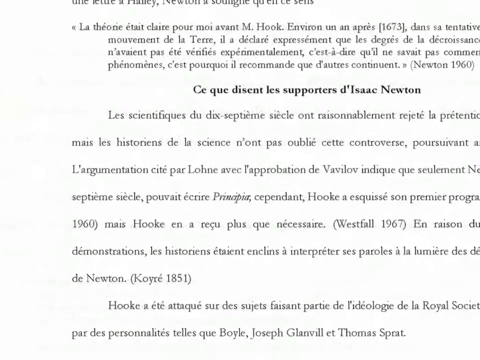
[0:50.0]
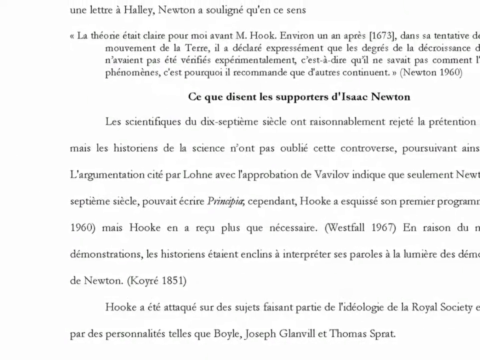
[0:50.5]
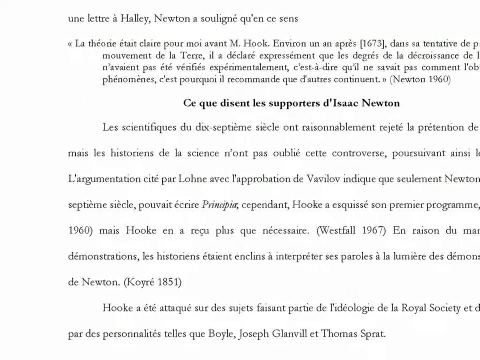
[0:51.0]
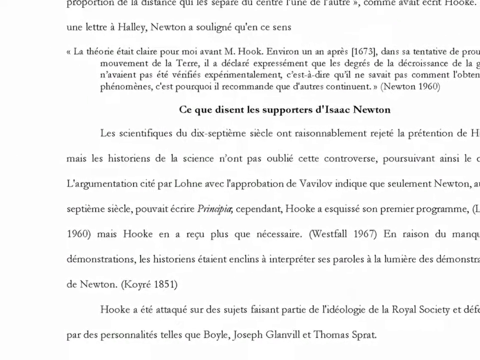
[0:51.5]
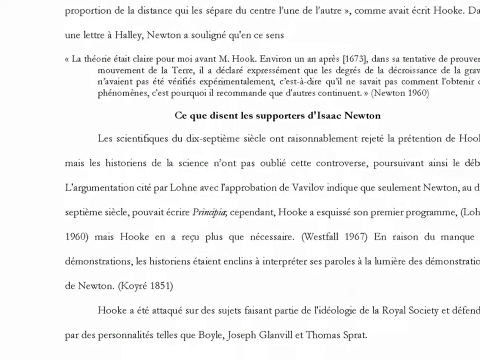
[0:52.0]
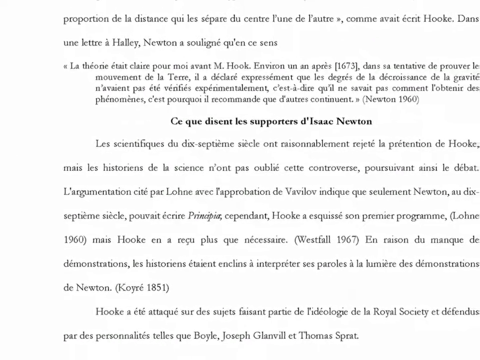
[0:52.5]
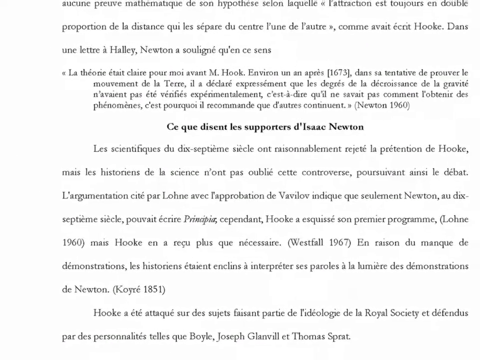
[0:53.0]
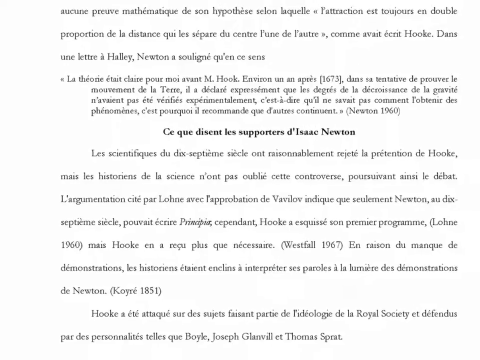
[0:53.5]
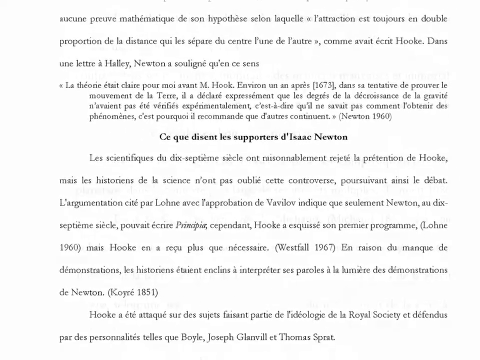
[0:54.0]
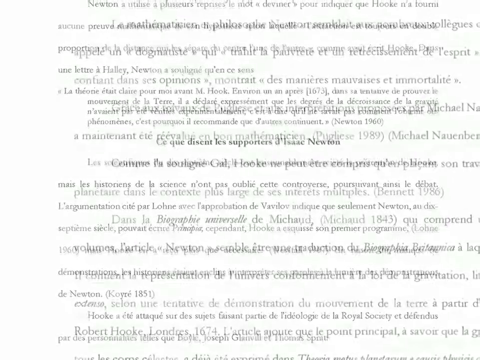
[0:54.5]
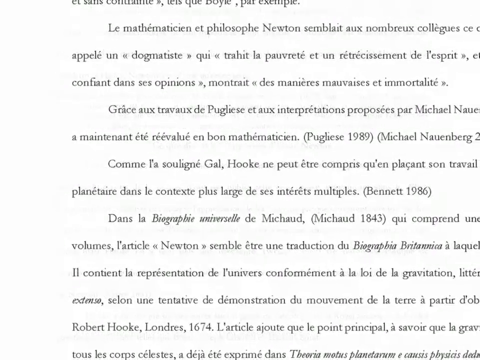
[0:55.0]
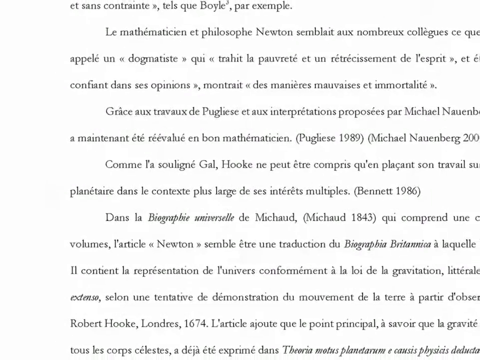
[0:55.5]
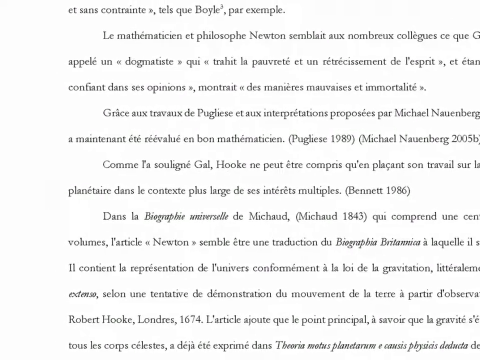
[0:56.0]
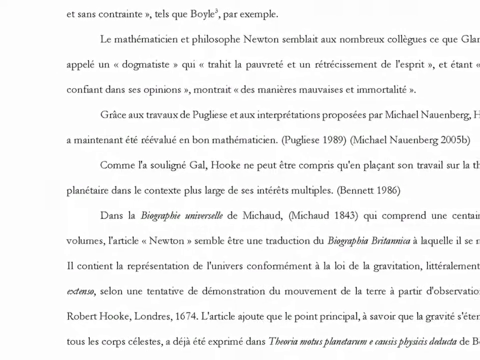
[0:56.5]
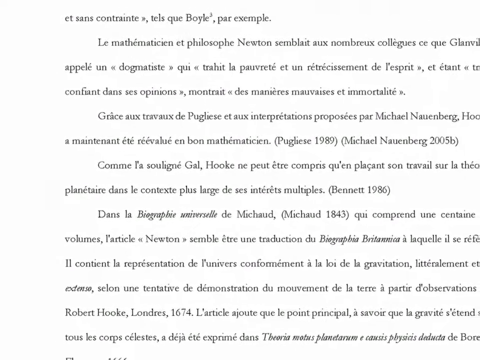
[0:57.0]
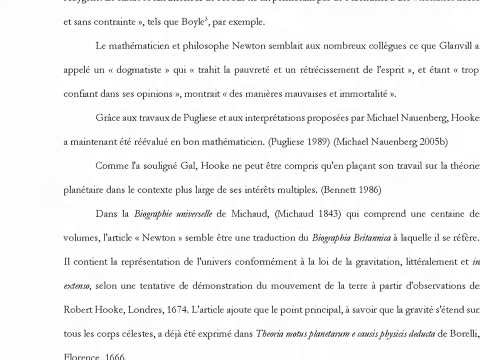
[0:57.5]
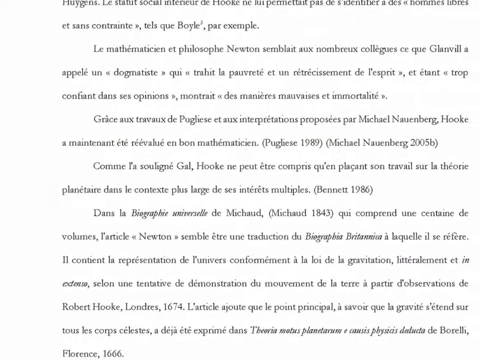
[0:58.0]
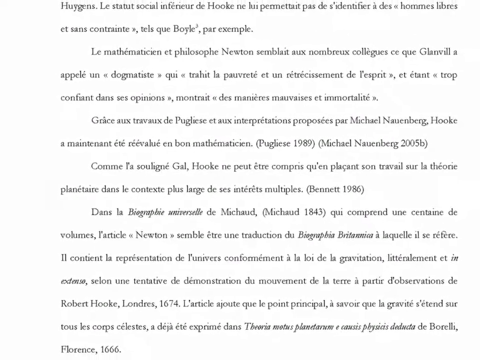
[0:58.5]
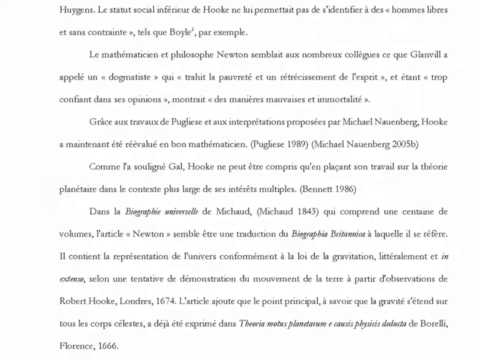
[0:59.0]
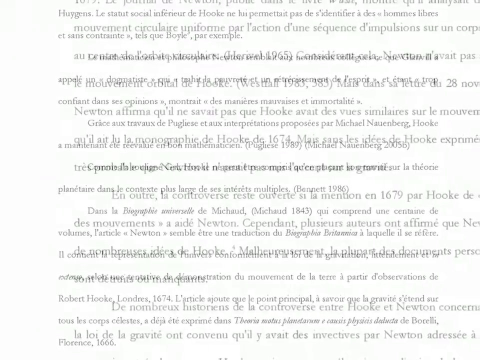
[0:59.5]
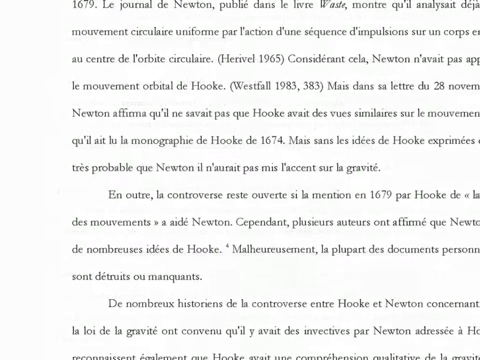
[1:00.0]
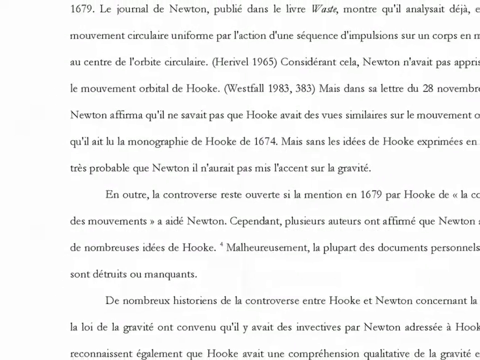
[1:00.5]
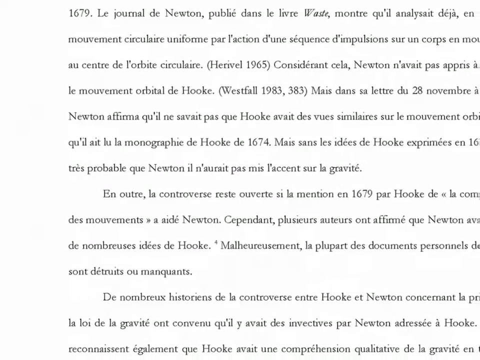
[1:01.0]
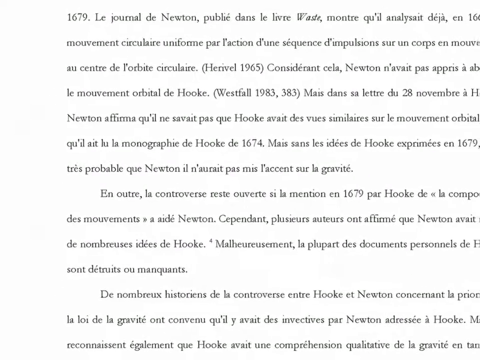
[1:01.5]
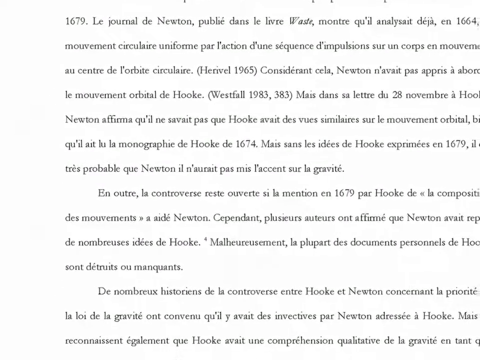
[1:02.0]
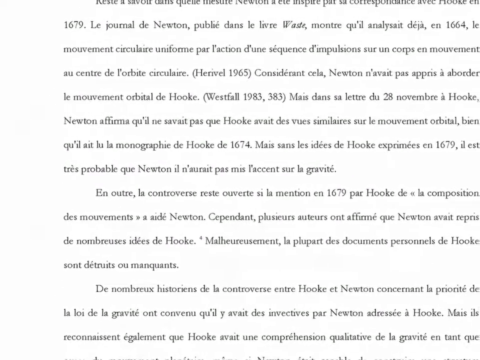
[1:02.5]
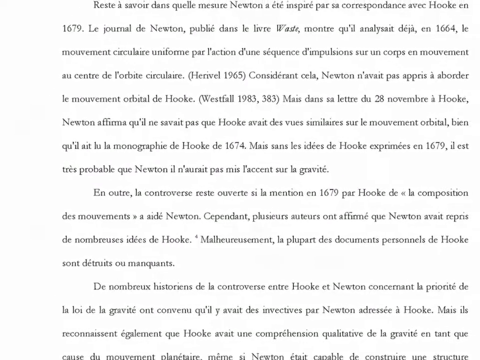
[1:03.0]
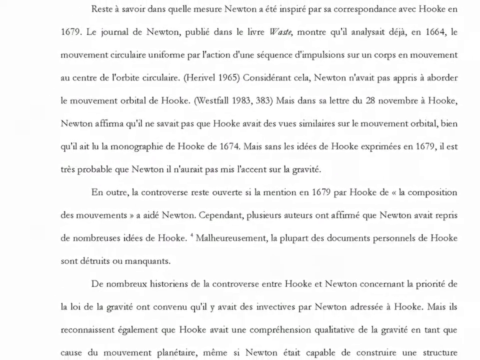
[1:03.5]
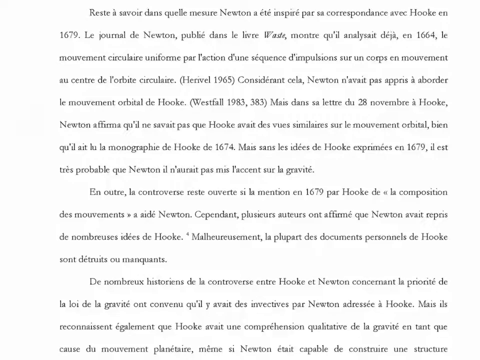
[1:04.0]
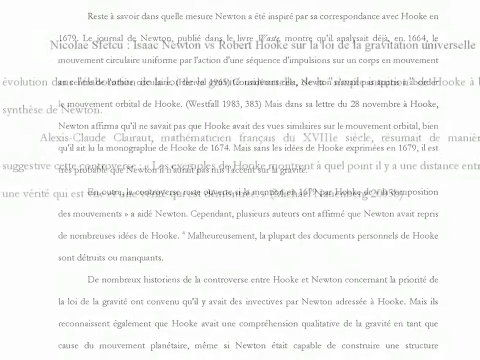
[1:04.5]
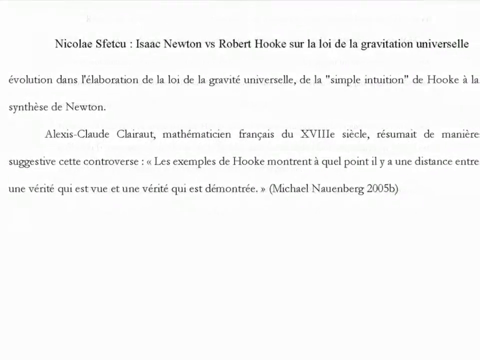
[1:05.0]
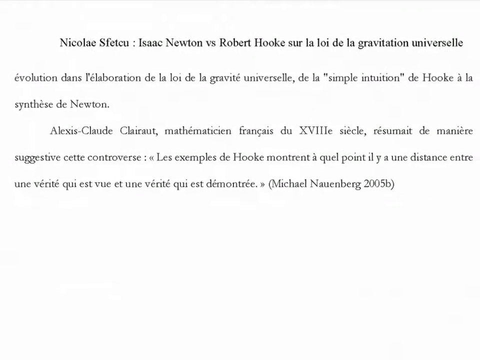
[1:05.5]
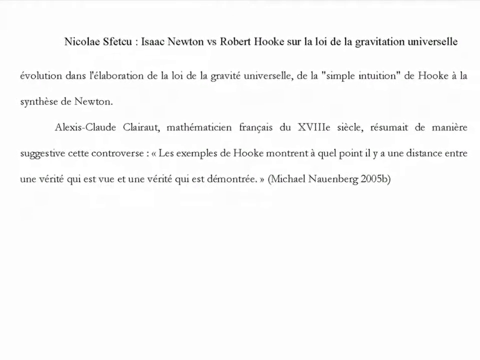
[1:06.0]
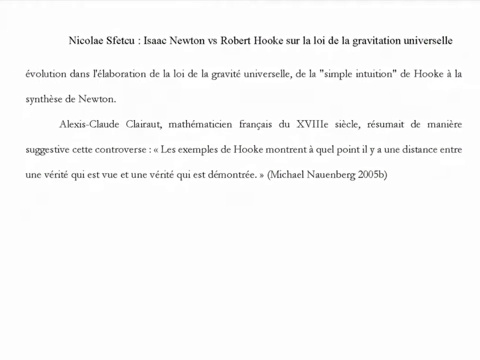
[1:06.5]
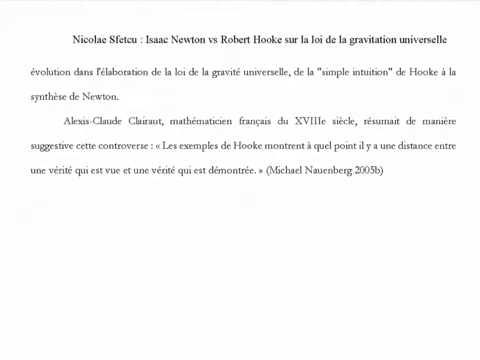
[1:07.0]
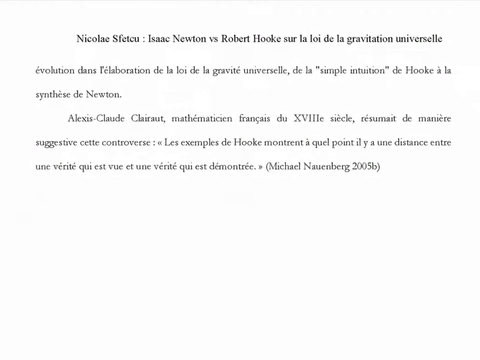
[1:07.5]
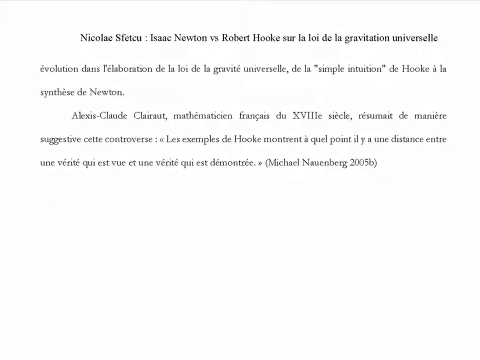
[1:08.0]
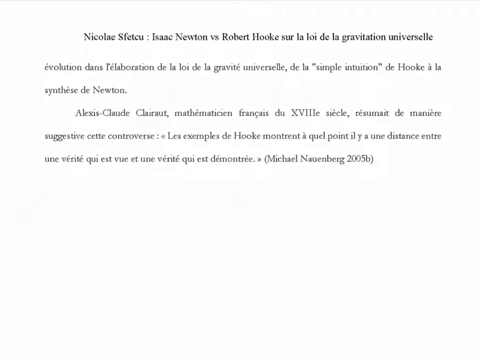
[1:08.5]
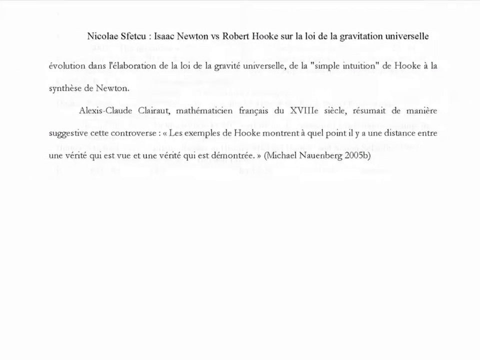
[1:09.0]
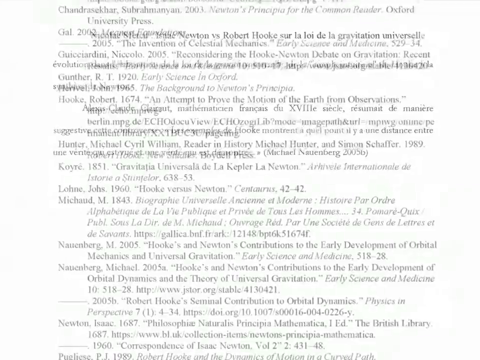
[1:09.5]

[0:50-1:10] The video cuts back in to show more of the written document. It states Hooke versus Newton, followed by several passages, possibly about what each of them did or the arguments over who was right. The text is not in English and seems to concern their research and the law of gravity. It is a long document.